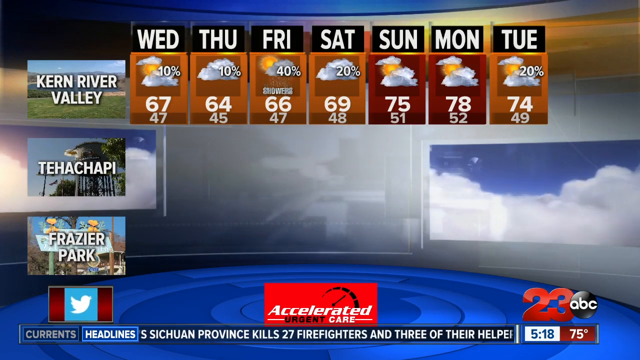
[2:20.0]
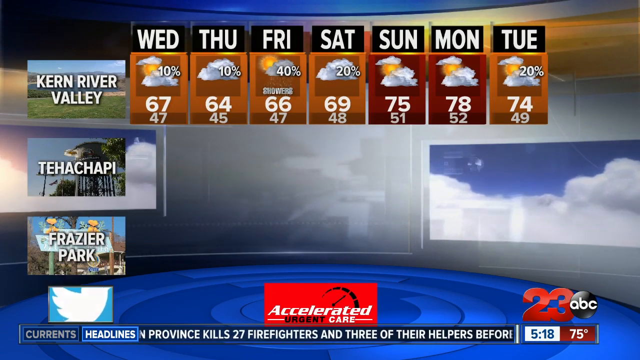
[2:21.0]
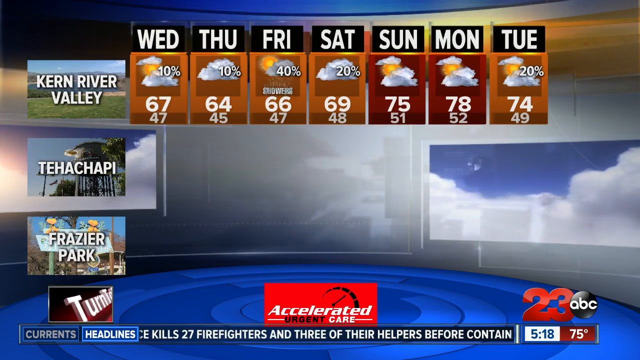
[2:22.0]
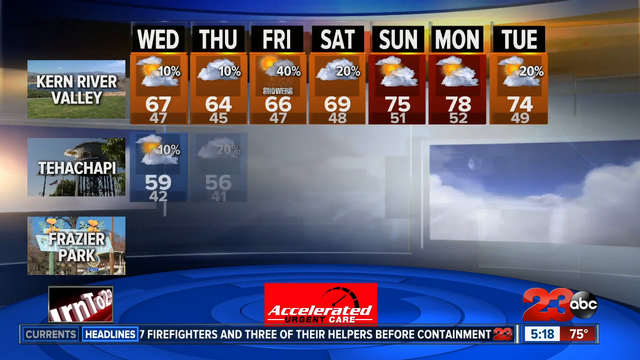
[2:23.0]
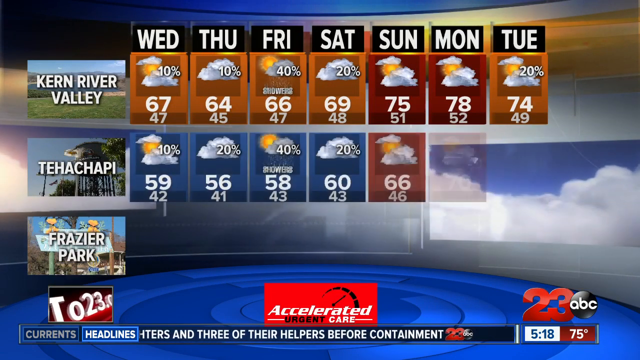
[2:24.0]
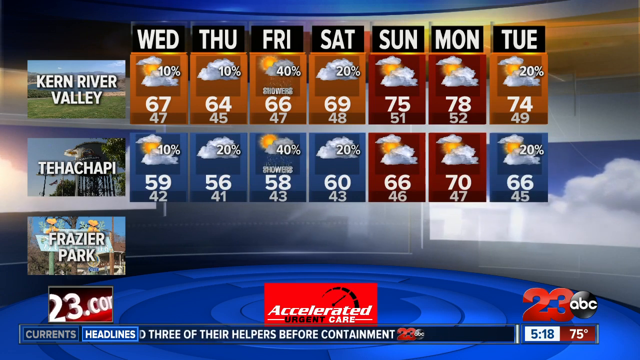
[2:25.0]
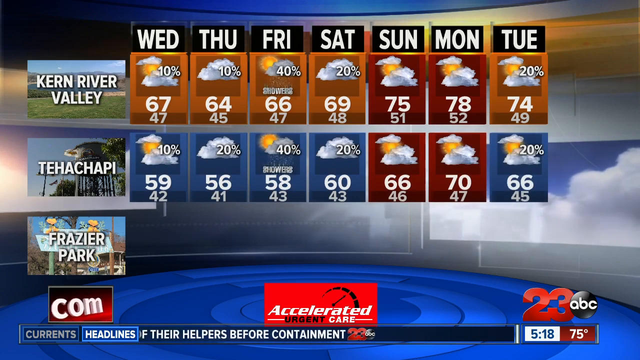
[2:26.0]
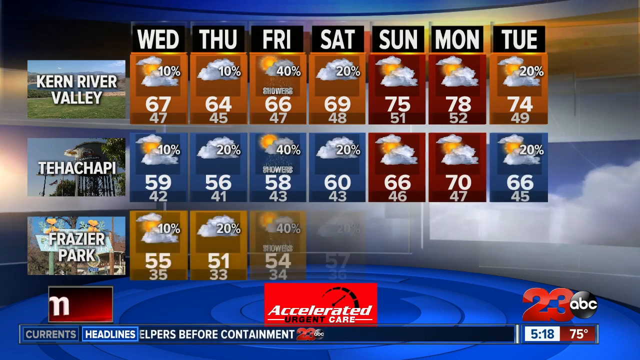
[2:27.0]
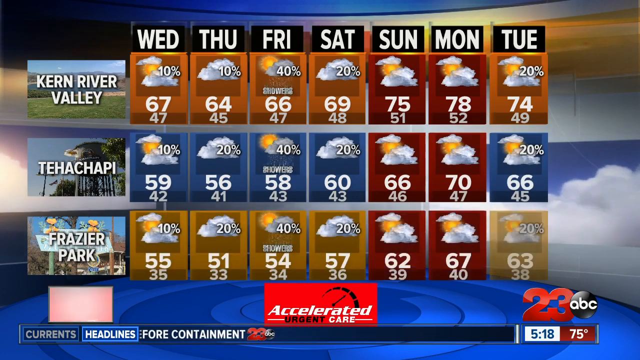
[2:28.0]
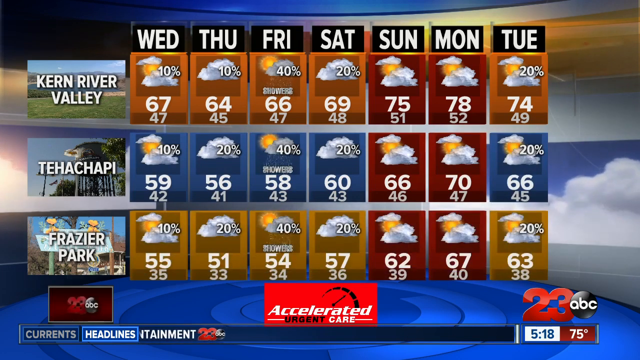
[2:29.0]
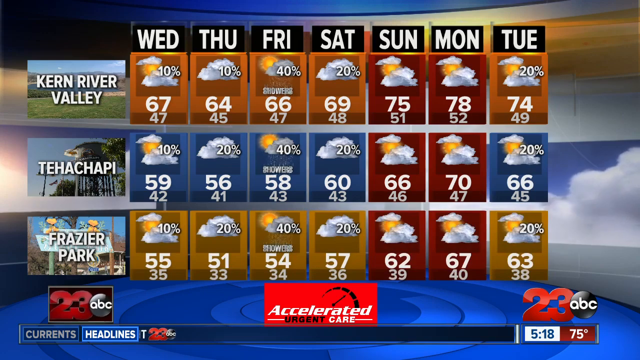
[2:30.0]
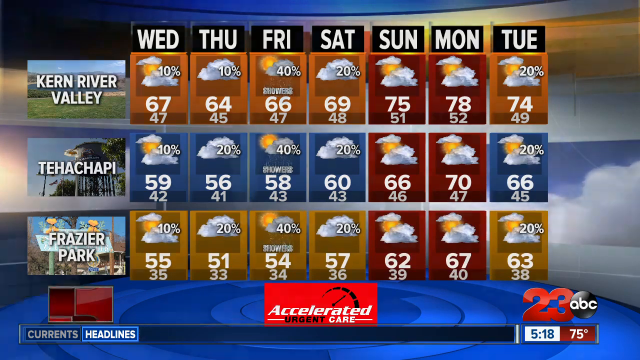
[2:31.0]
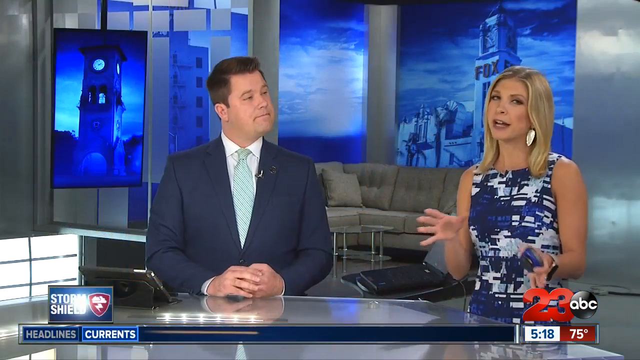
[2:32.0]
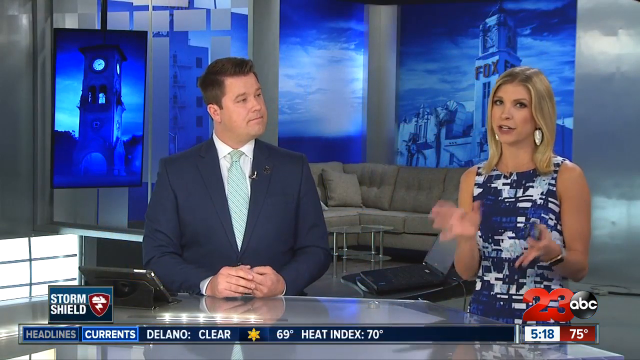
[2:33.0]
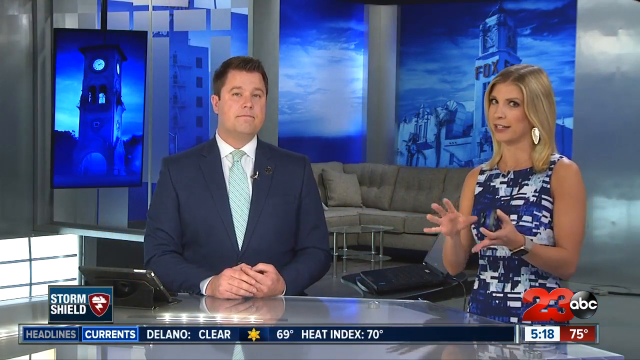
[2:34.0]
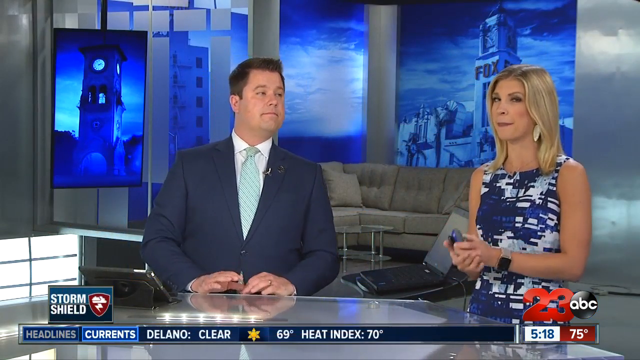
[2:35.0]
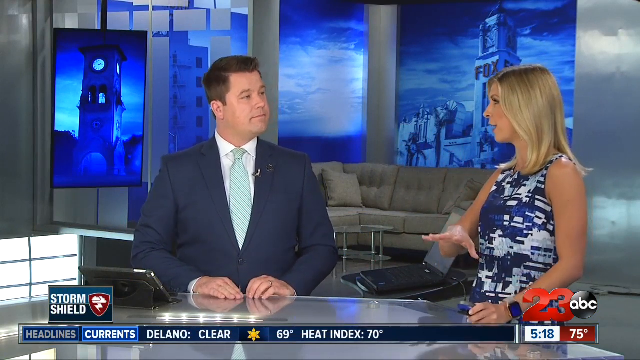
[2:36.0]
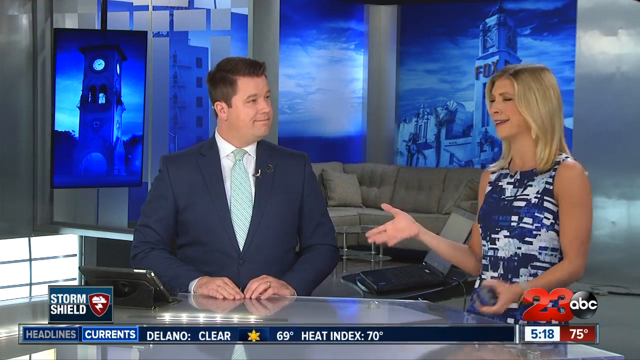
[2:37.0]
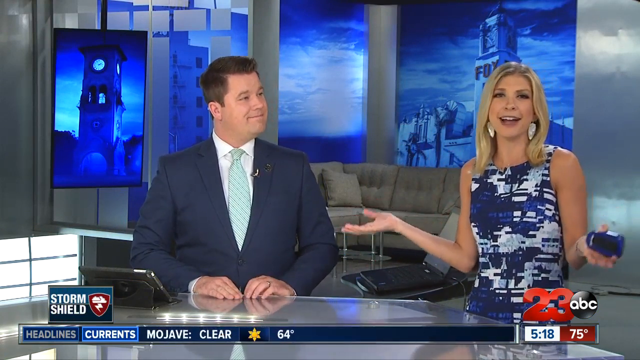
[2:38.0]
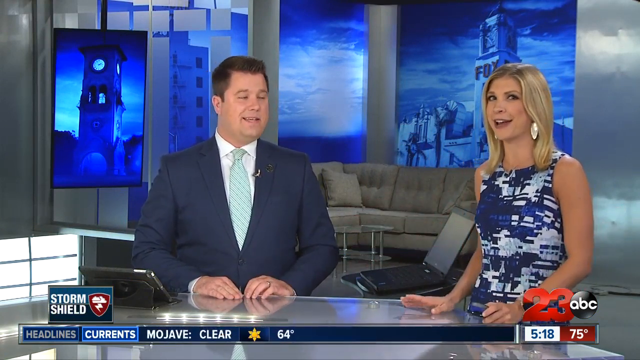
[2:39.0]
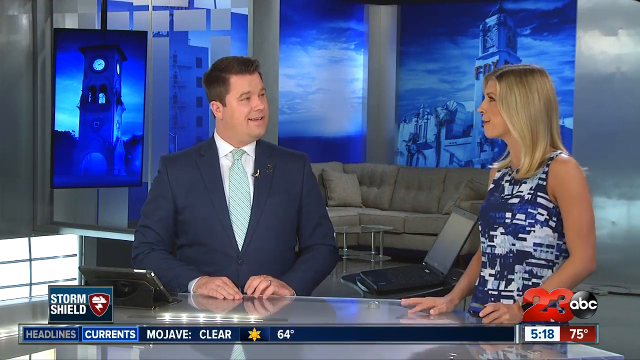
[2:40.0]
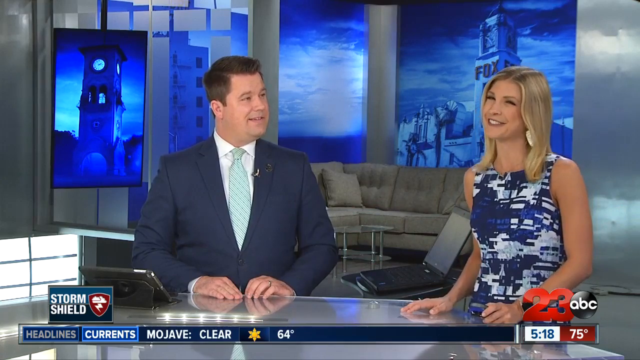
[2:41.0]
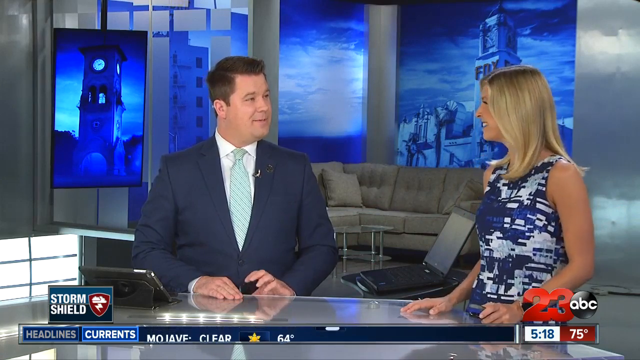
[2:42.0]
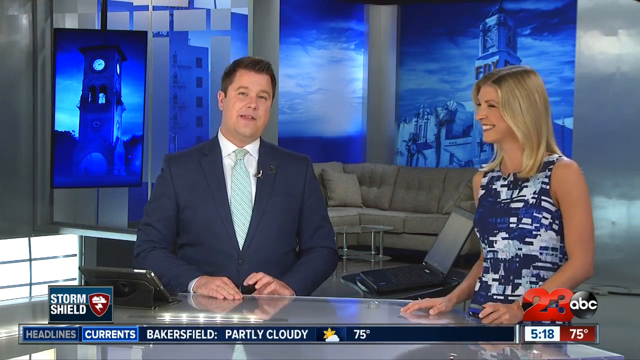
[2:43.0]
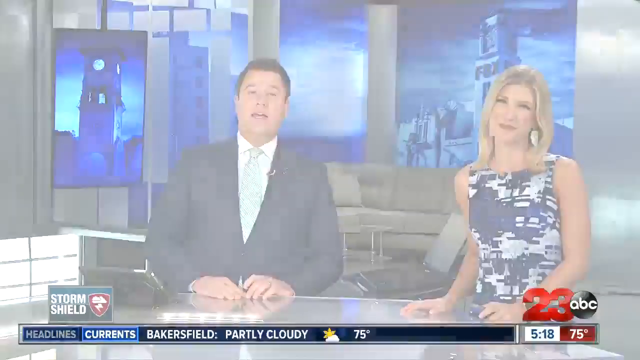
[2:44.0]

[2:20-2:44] Still in the news station weather segment, the top of the screen shows the weather for Wednesday through Tuesday, and on the left, from top to bottom, are pictures of areas labeled "Kern Valley," "Tecapache" and "Fraser Park." The weather for Tecapache comes up, then for Fraser Park, showing the high, the low and the percentage of rain for each area. The view then returns to the newsroom, with computer screens in the back and a gray couch. The two news anchors sit at a table: the man in the blue suit from the beginning and the female weather person, who sits with her hands still on the clicker. The two appear to talk, and at one point she laughs with her arms out.